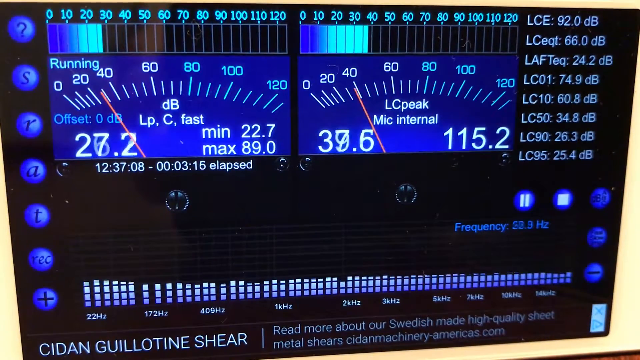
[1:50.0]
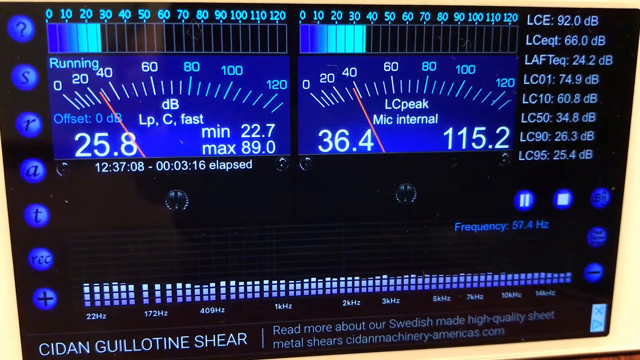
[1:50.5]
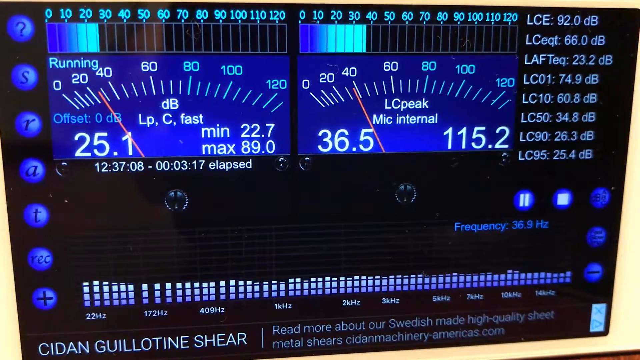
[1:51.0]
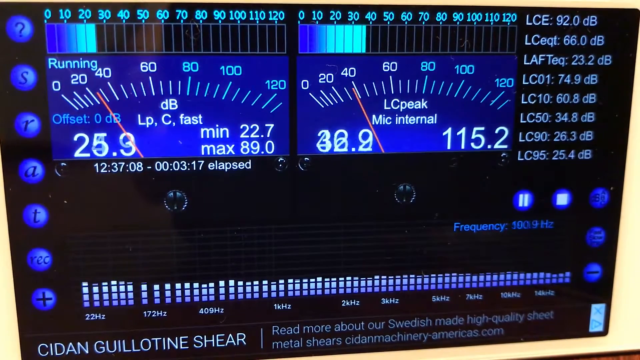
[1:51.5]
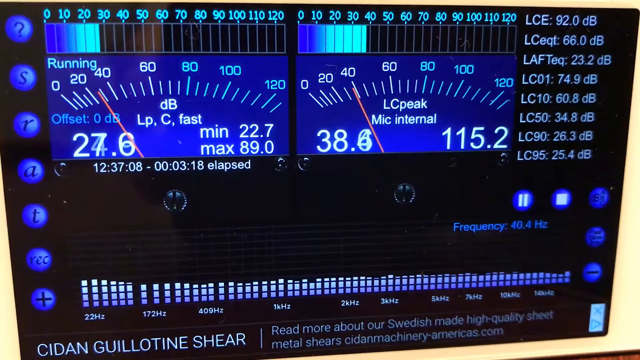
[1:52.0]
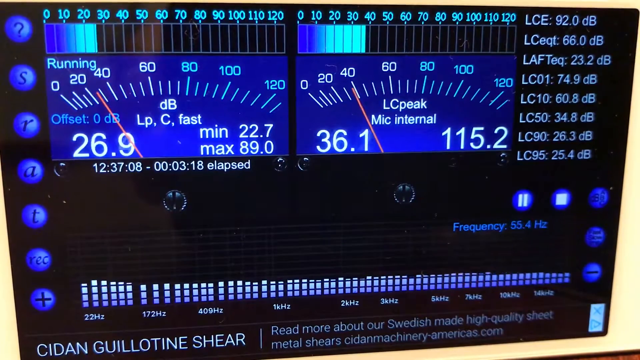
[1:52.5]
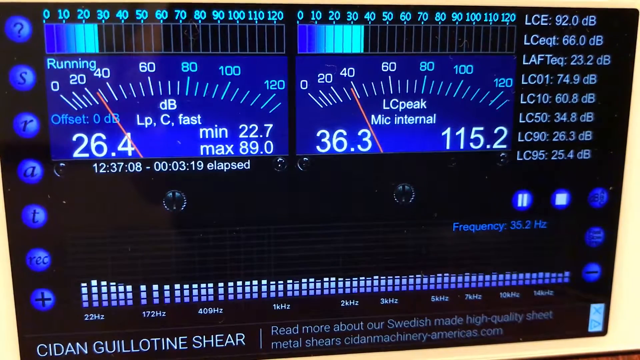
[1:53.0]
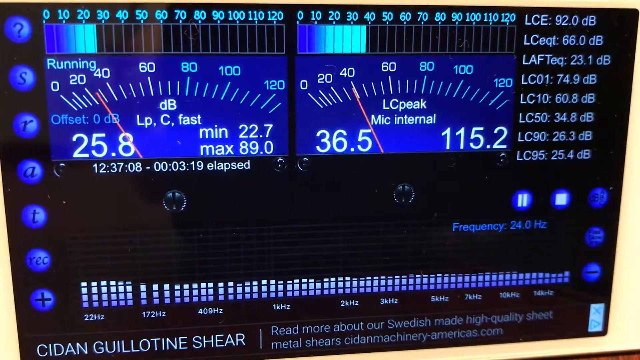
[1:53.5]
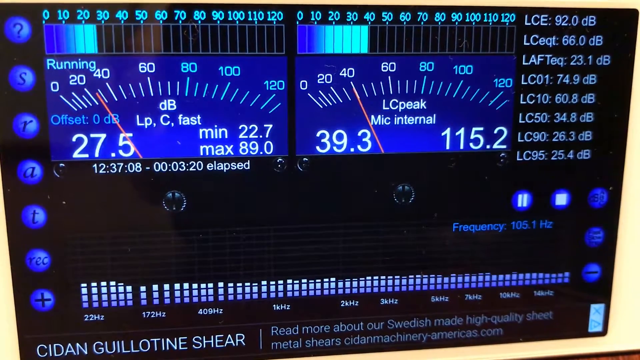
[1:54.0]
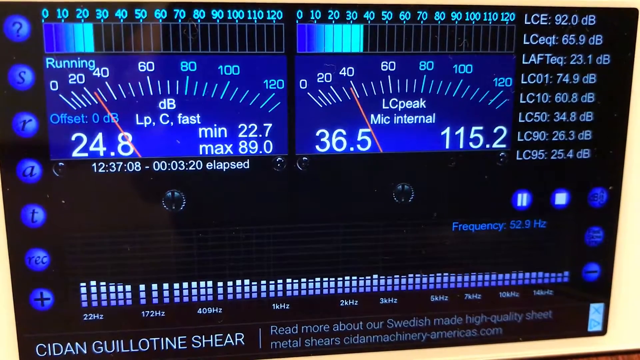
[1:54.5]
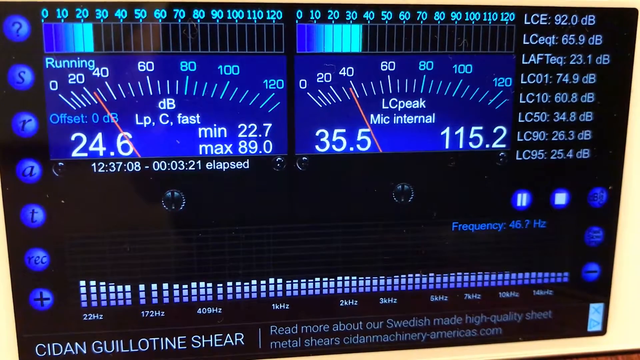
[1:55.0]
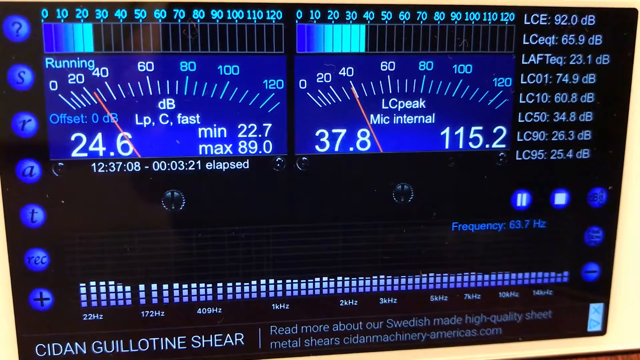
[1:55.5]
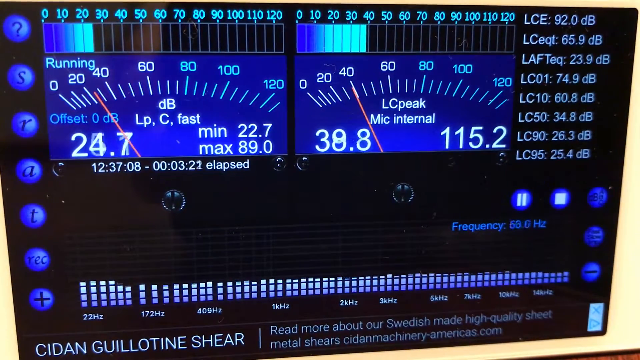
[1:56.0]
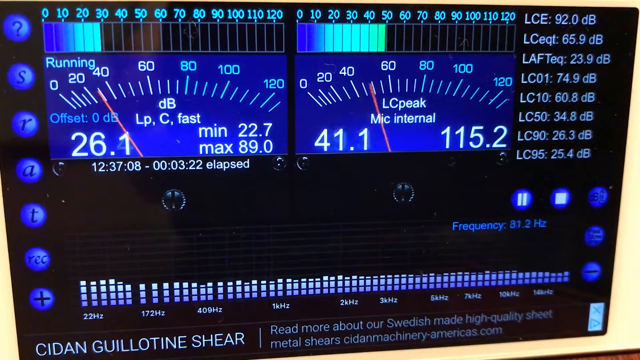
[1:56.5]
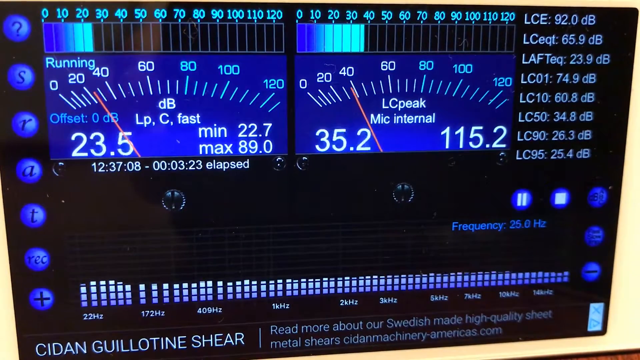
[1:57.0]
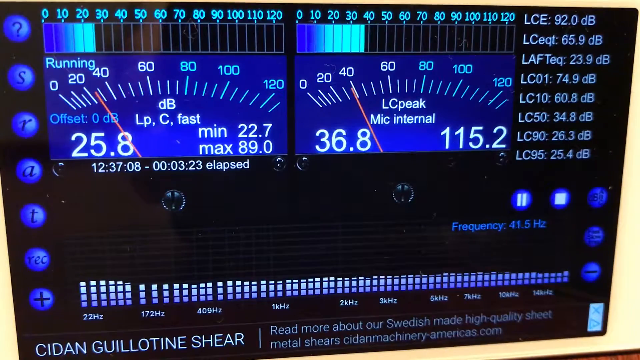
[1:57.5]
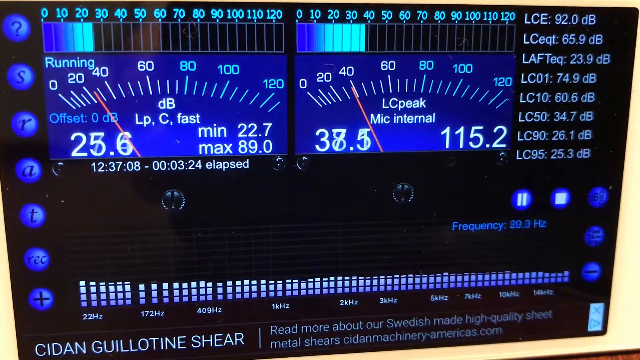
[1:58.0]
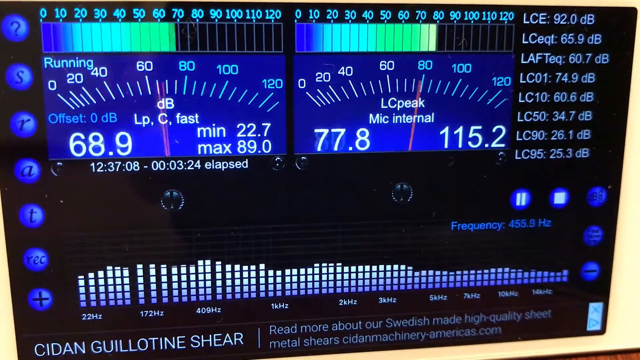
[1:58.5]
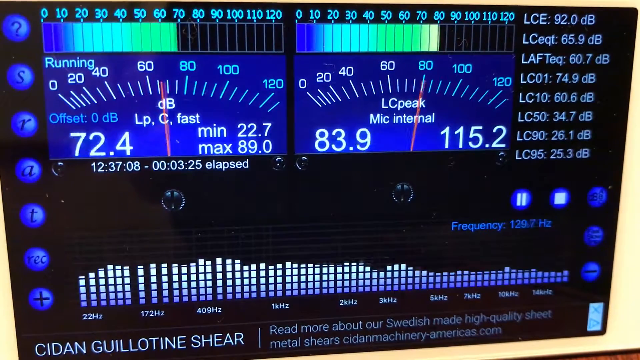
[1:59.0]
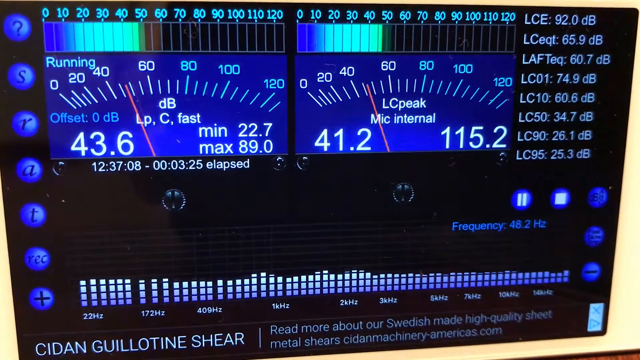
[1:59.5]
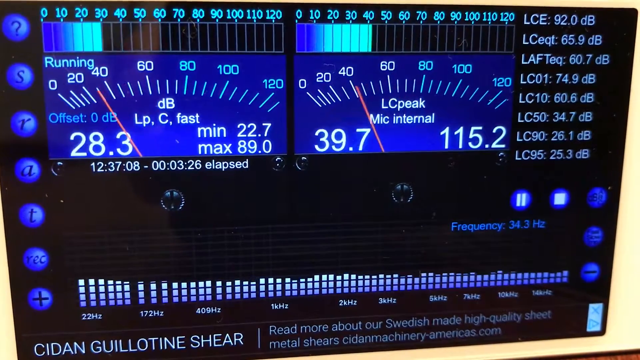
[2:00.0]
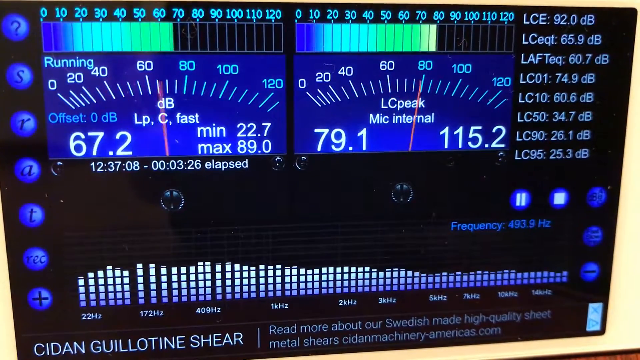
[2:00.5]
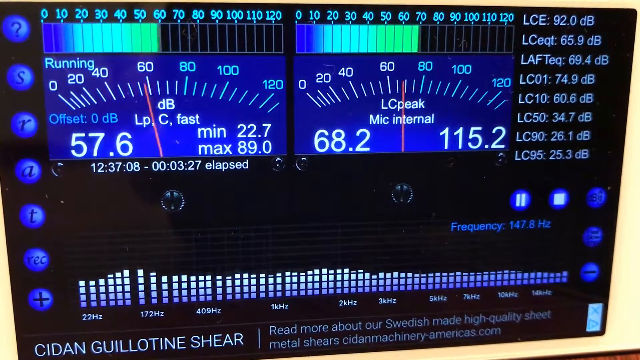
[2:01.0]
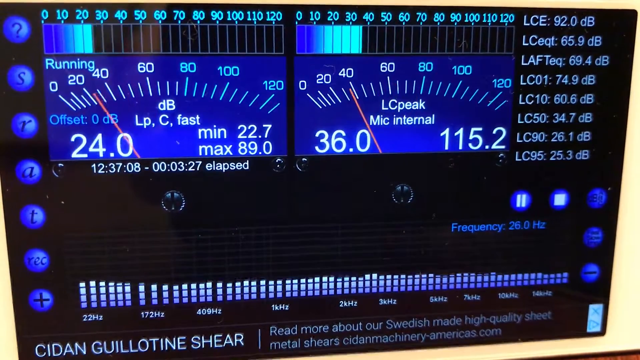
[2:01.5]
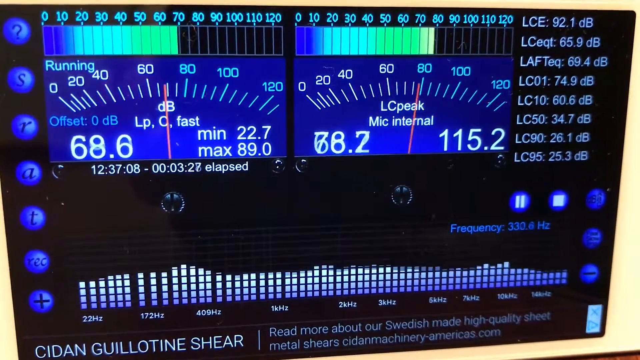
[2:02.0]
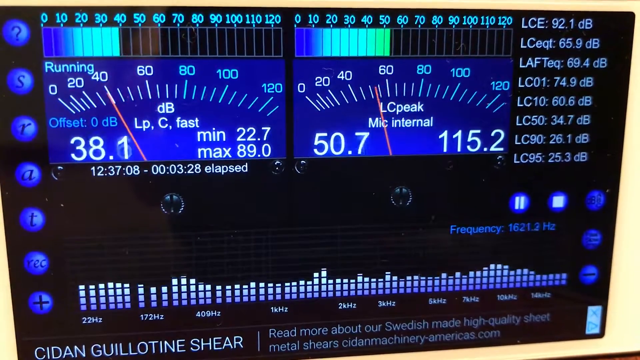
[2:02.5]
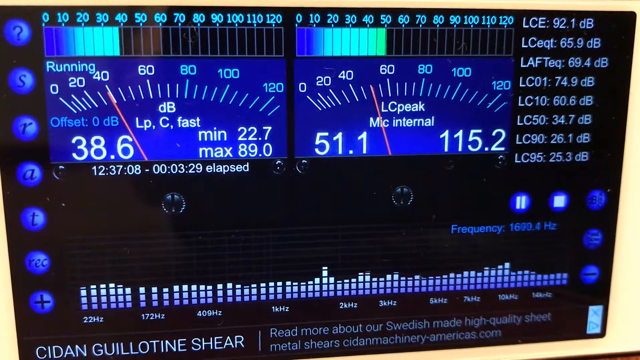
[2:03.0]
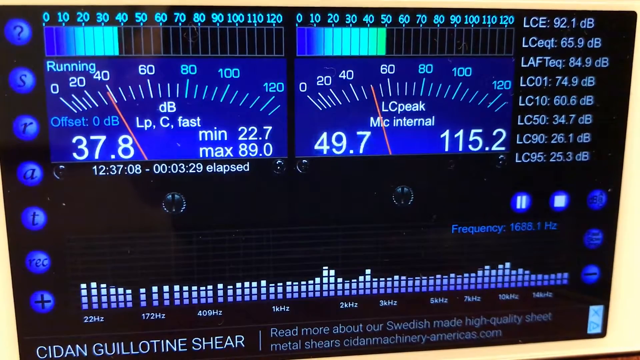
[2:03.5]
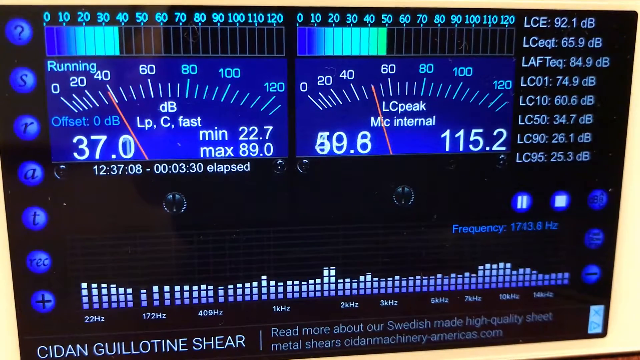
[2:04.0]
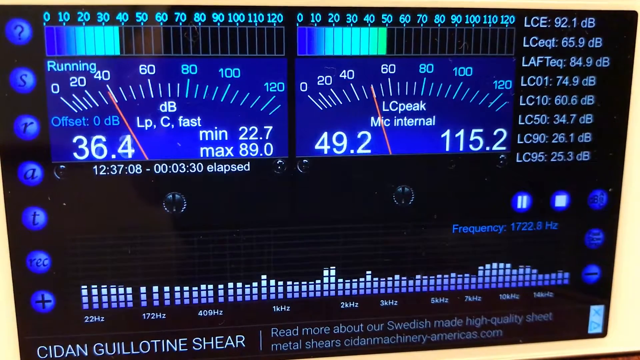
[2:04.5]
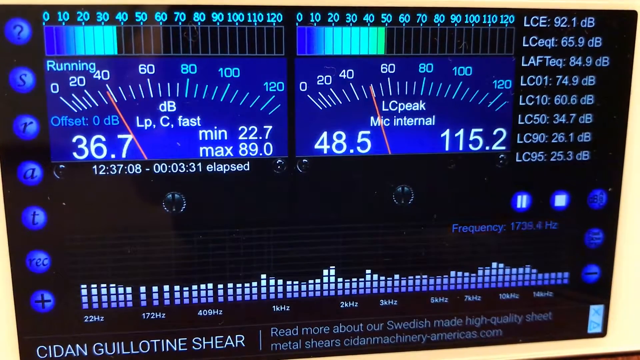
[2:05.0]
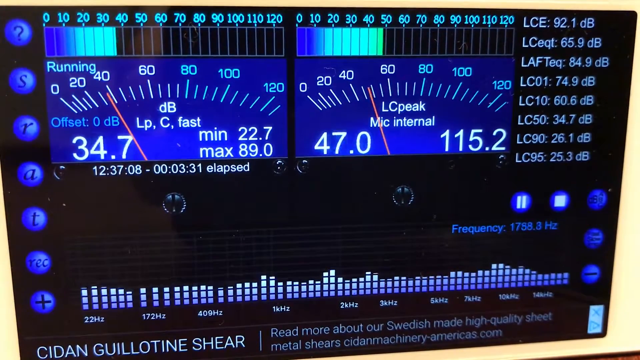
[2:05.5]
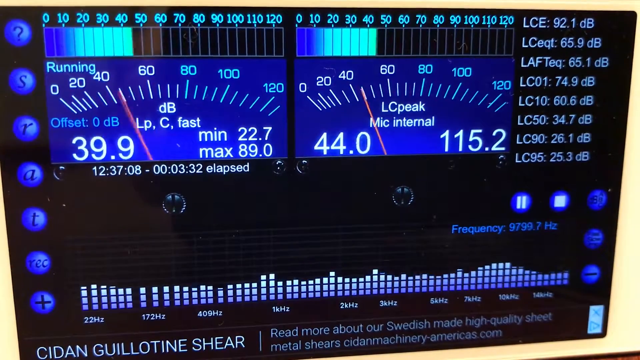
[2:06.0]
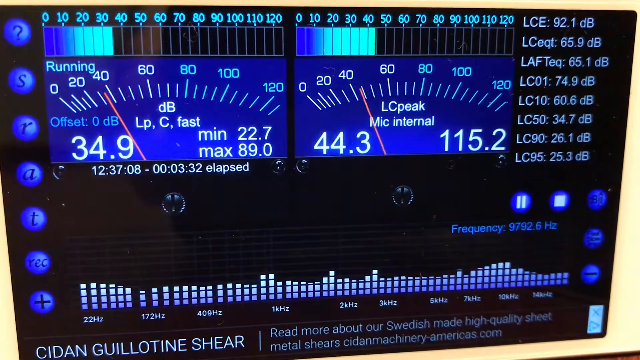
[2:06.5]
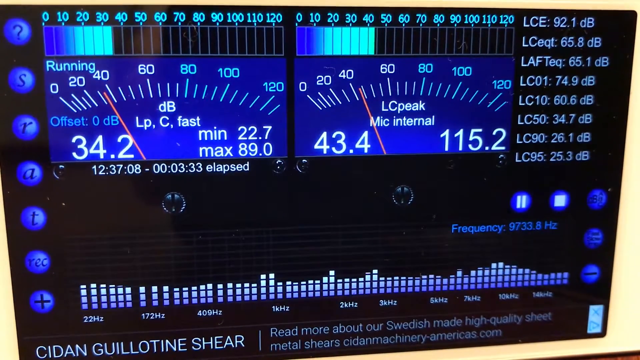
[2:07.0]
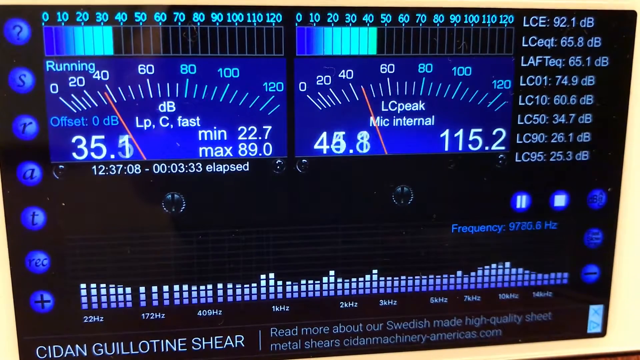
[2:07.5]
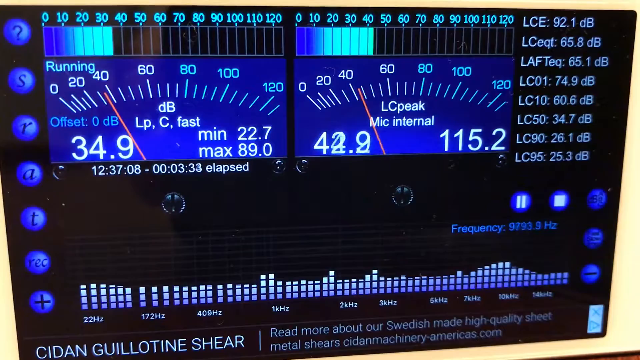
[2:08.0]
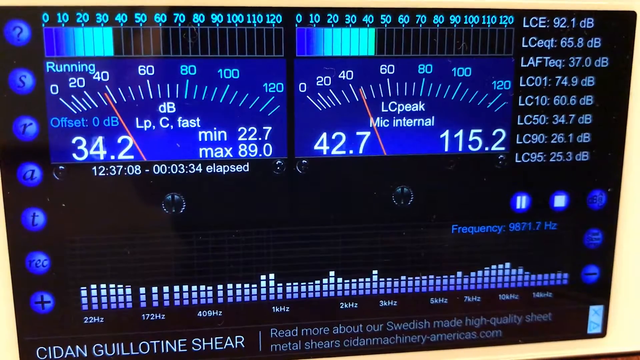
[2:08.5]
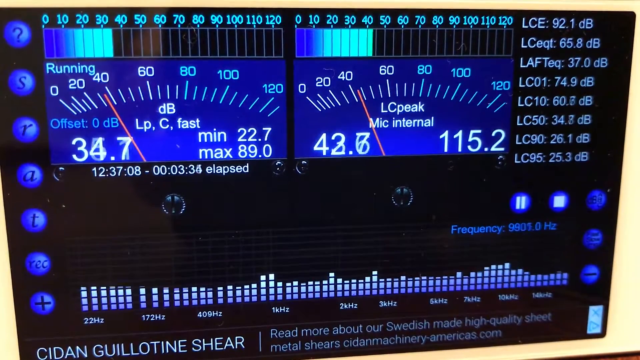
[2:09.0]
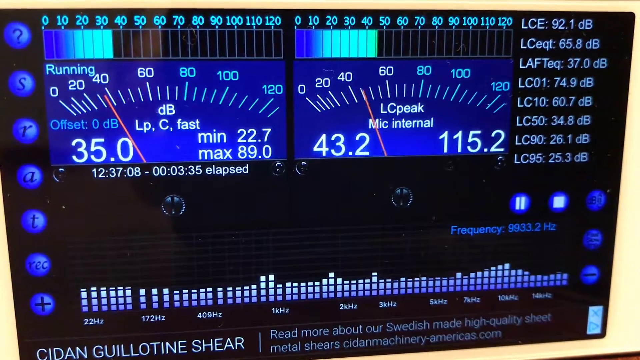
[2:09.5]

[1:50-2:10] The camera is zoomed in on an app on a white iPhone measuring a song or music. Bars go up and down to the right, and two scales have hands moving up and down between 60 and 80; the app appears to measure decibels and peak levels of a microphone. On the right-hand side are many different decibel measurements and a stop and a pause button; blue icons are on the left-hand side. The whole app is black, with dark blue icons and gauges. Ads run across the bottom, showing it is freeware. A time scale shows the seconds or minutes elapsed, and the frequency is displayed. What looks like an equalizer bounces up and down across the bottom.